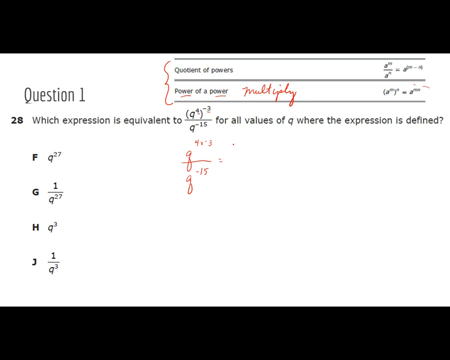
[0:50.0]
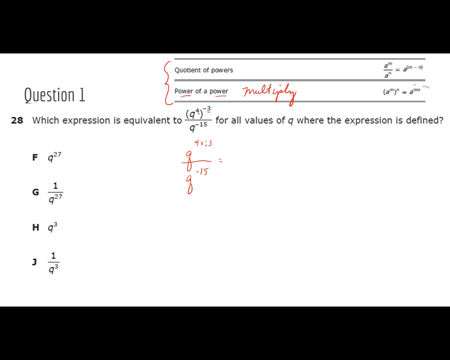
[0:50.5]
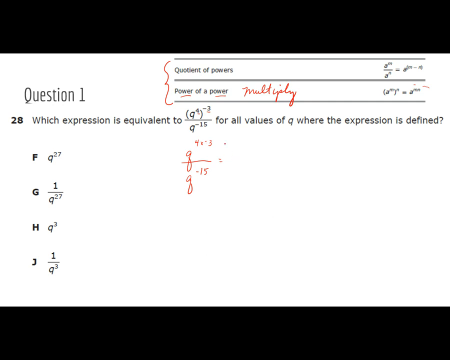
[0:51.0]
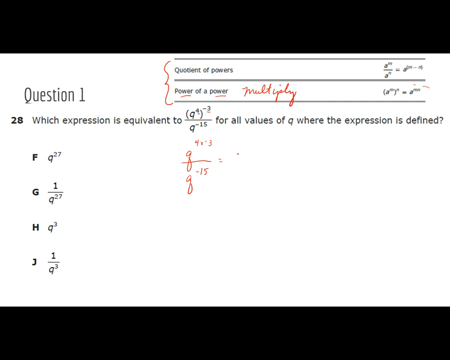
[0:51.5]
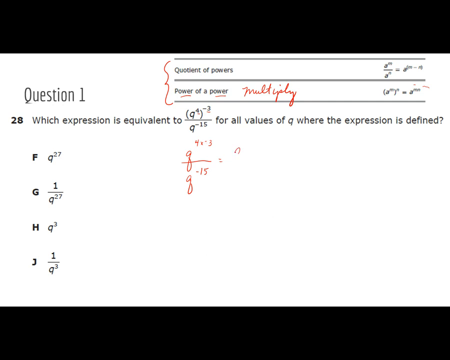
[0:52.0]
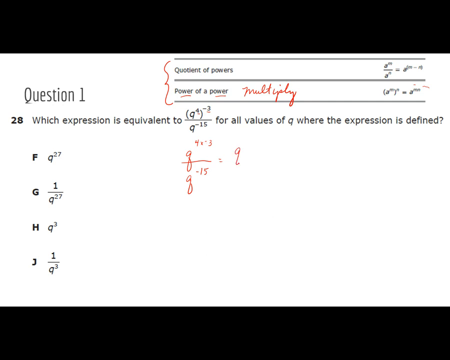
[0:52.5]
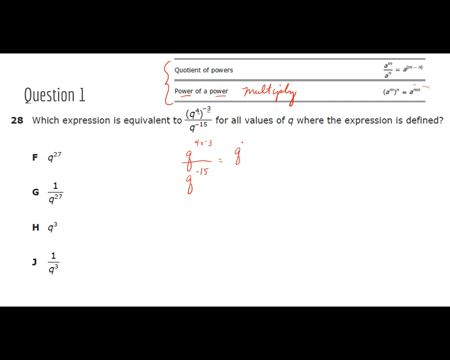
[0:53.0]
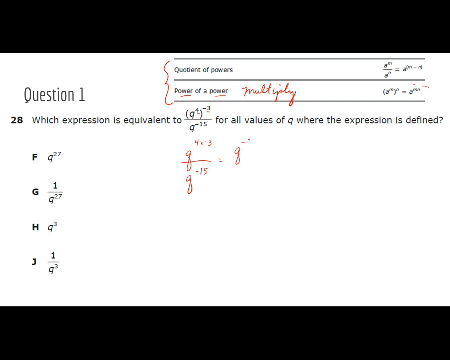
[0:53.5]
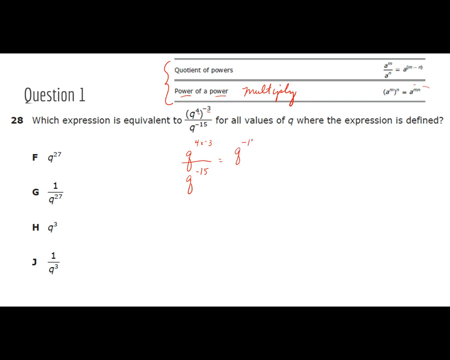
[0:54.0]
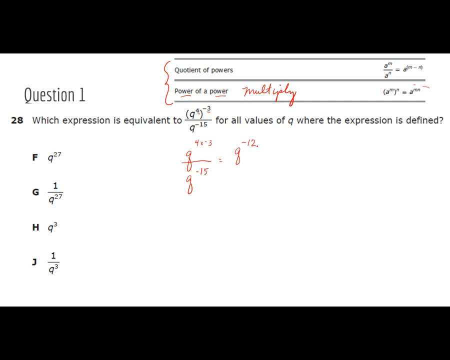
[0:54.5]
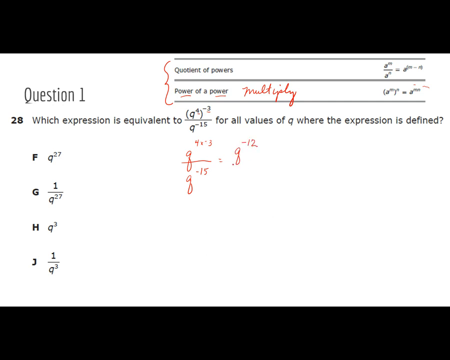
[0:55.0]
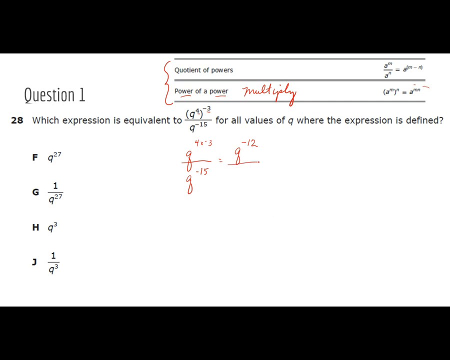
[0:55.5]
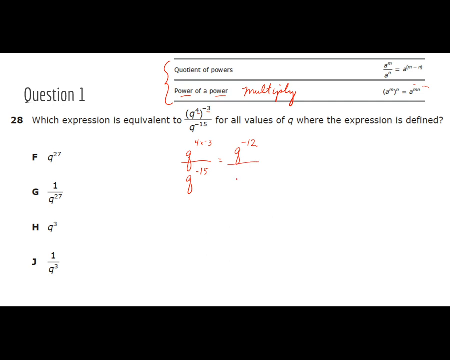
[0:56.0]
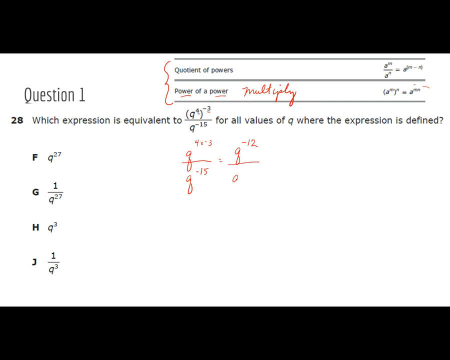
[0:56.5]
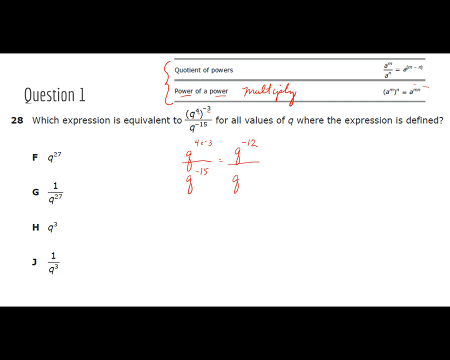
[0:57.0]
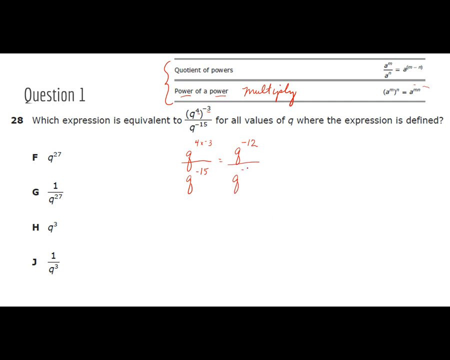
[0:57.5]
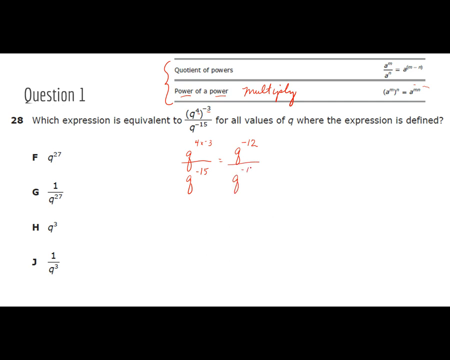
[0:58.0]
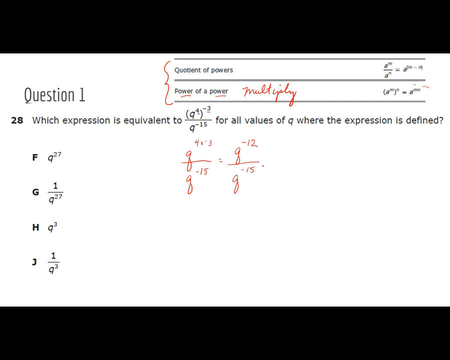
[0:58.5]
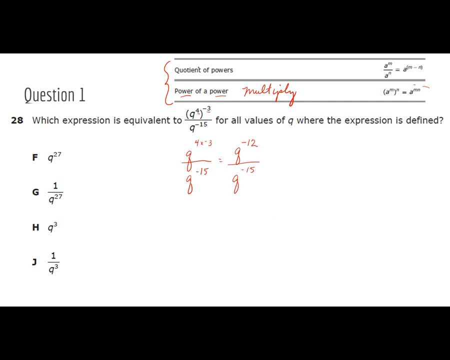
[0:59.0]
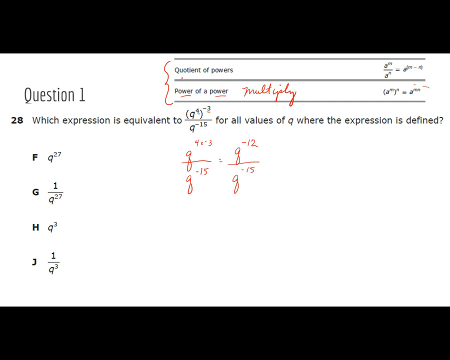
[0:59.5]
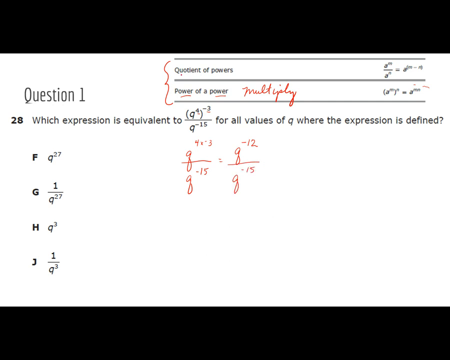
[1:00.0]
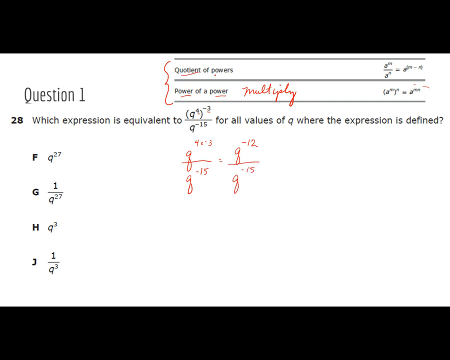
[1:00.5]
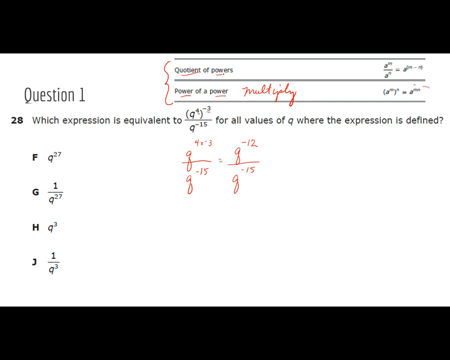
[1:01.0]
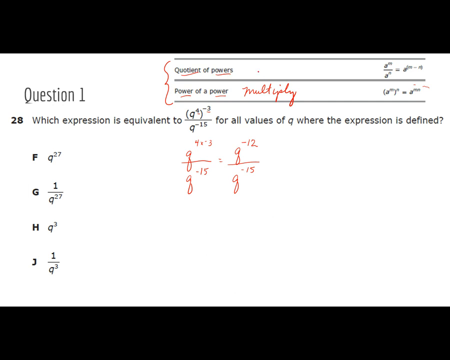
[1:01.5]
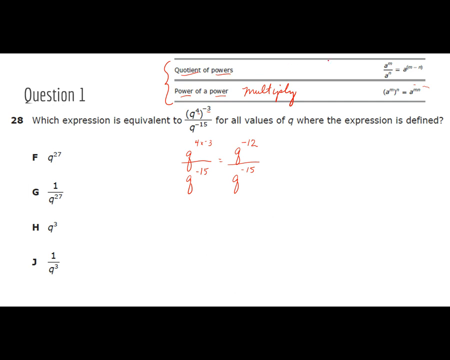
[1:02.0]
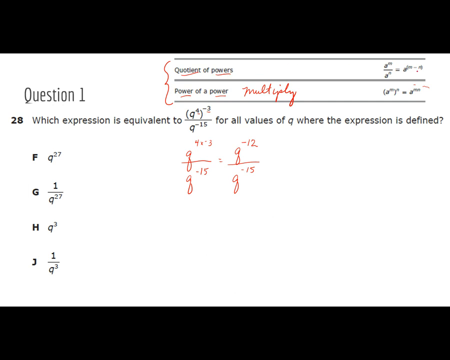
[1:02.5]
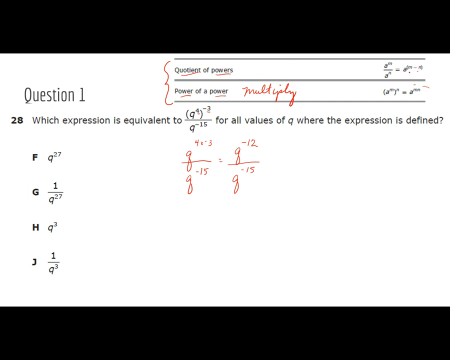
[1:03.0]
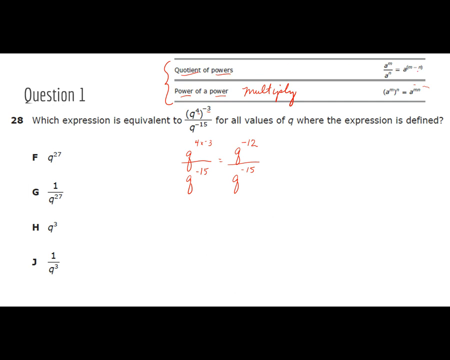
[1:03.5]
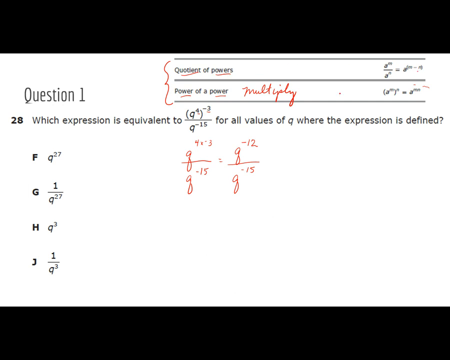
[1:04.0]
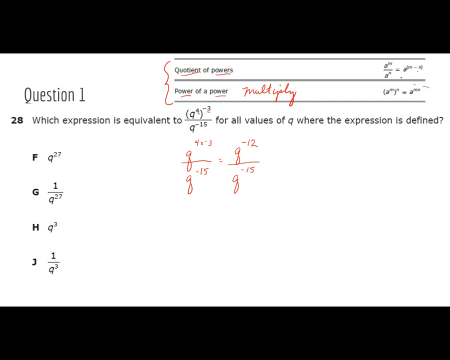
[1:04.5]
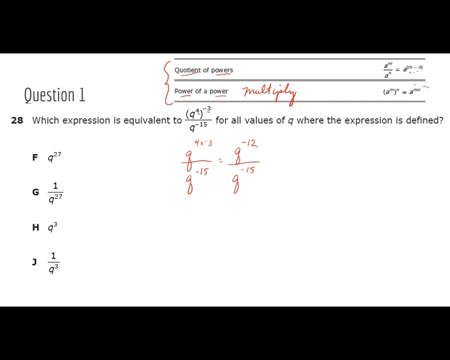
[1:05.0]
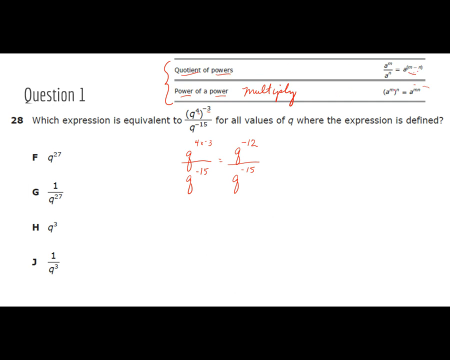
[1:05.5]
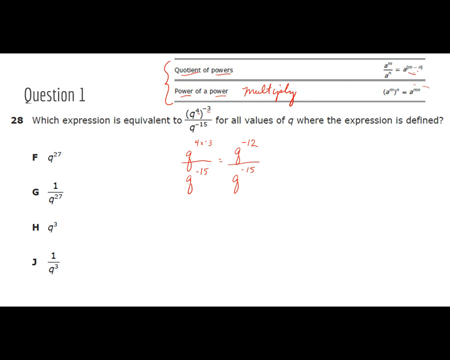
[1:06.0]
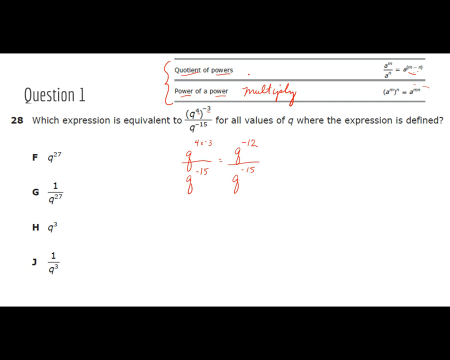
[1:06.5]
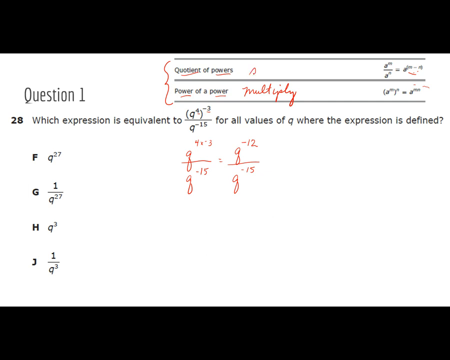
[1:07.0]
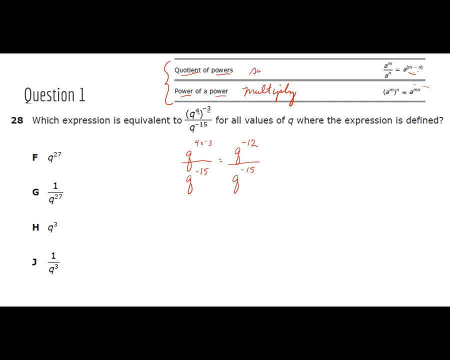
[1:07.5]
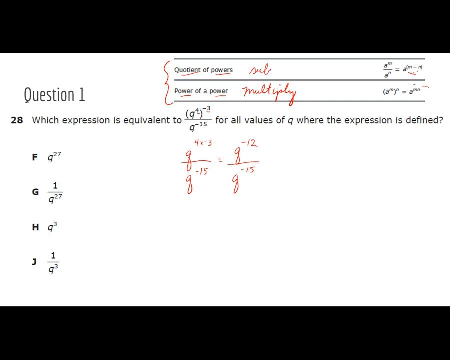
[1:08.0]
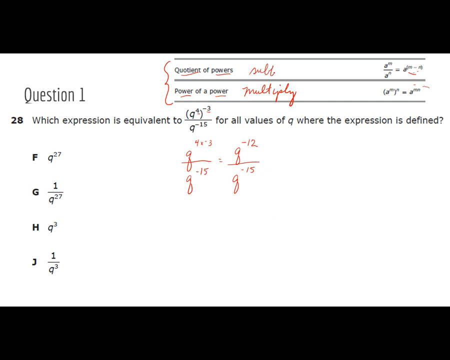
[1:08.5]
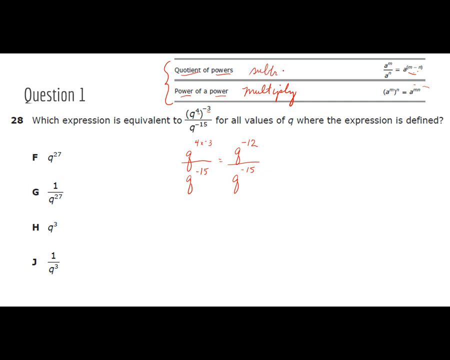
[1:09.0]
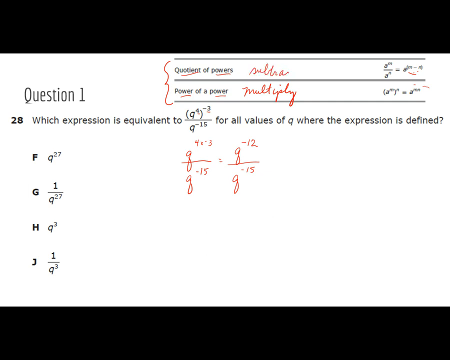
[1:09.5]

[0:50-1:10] The cursor writes q to the power of 4 times minus 3 divided by q to the power of minus 15, with the brackets of the original expression removed, then writes that this equals q to the power of minus 12 divided by q to the power of minus 15. The cursor moves to the top, underlines the words "quotient" and "powers" in the quotient of powers phrase, hovers around the equation for the quotient of powers, and underlines the equation. Between the phrase and the equation it writes "subtract", while "multiply" is written below, by power of a power.